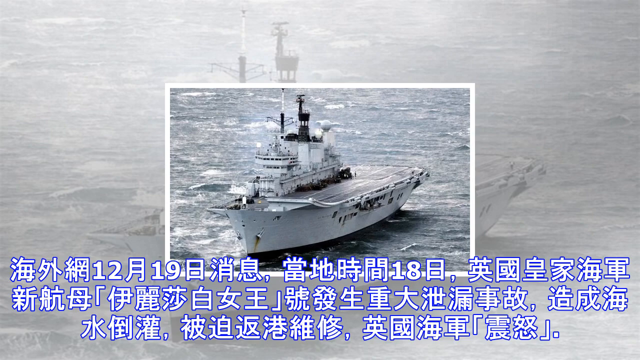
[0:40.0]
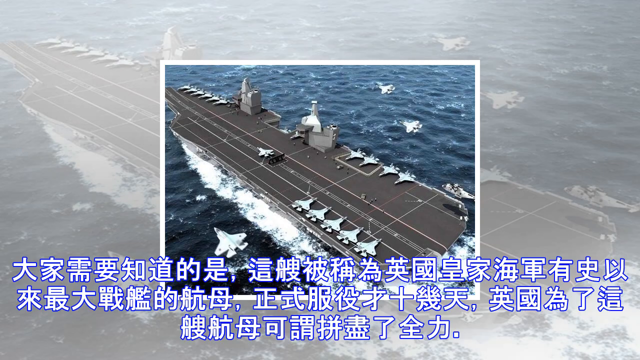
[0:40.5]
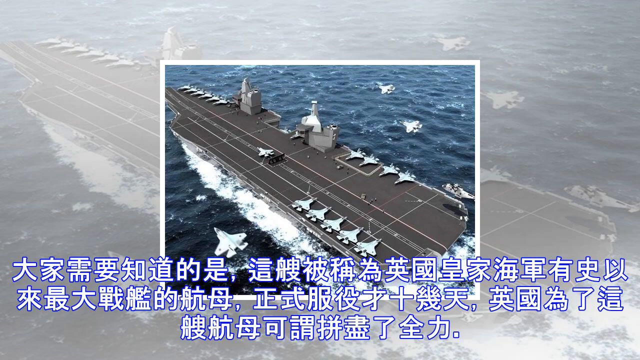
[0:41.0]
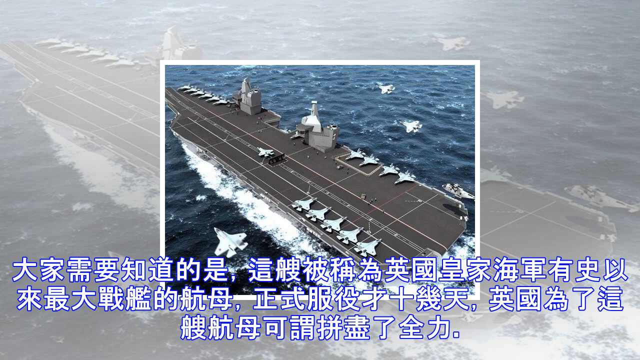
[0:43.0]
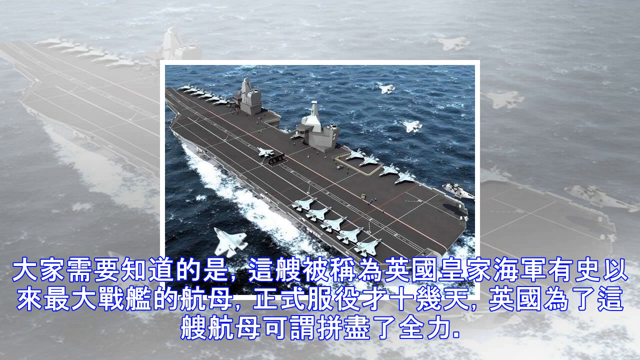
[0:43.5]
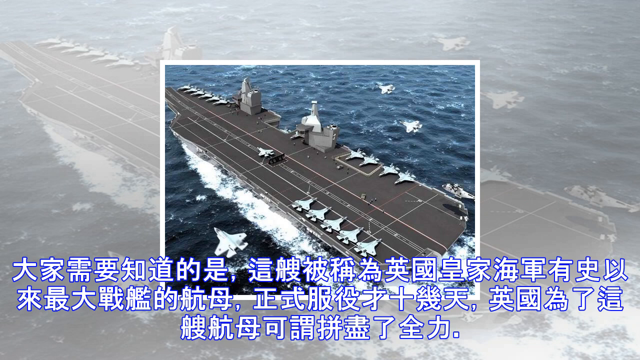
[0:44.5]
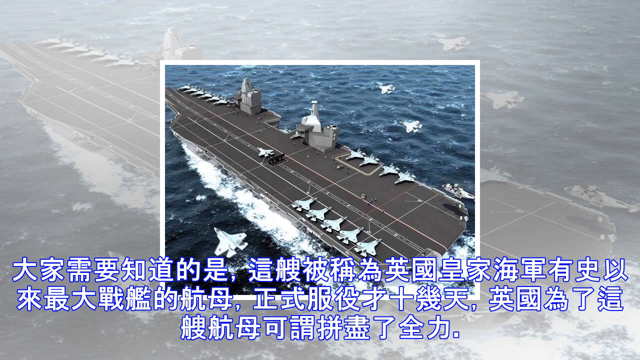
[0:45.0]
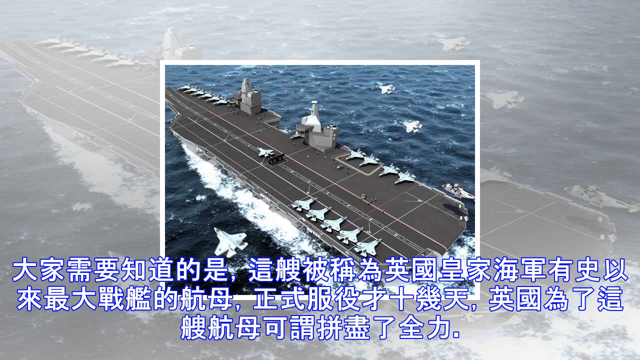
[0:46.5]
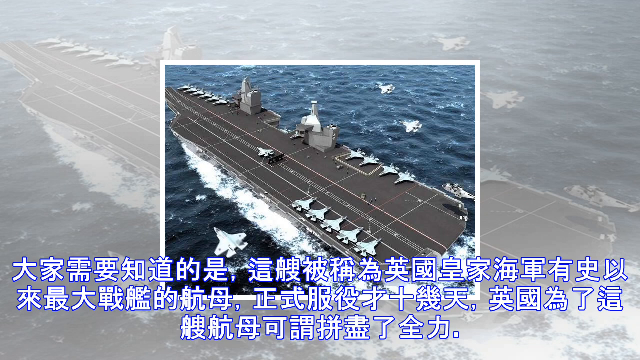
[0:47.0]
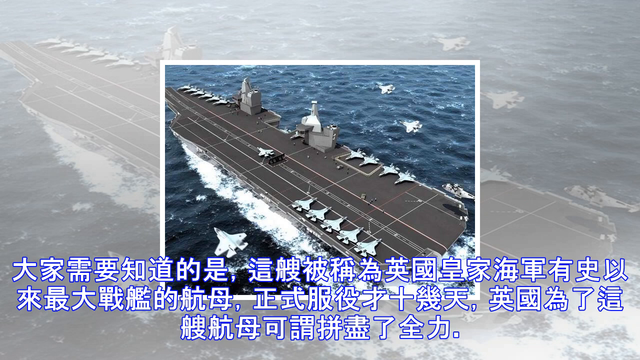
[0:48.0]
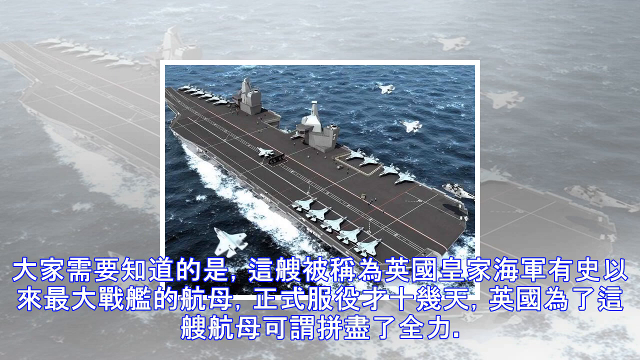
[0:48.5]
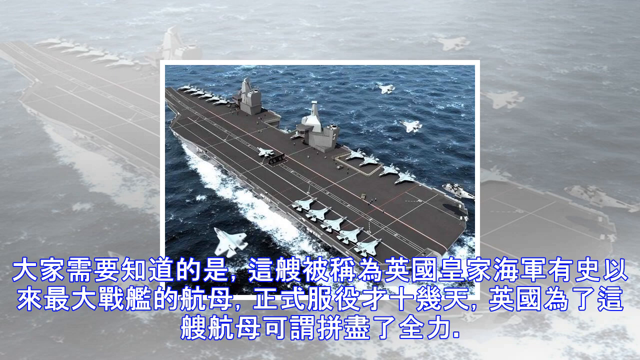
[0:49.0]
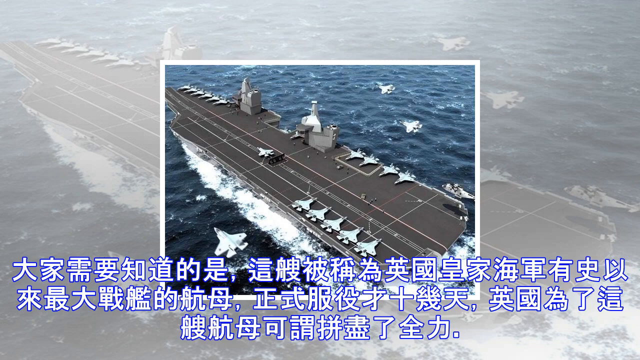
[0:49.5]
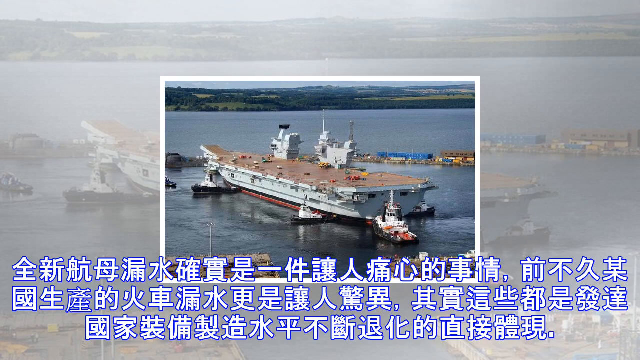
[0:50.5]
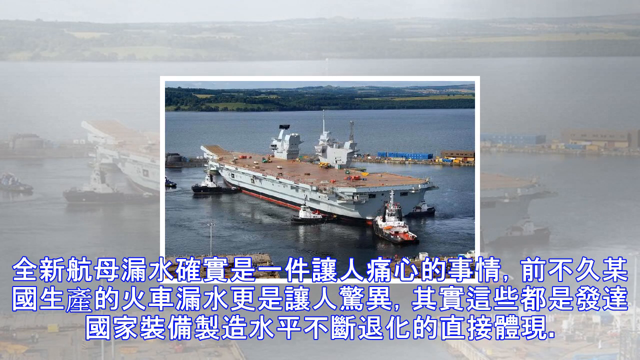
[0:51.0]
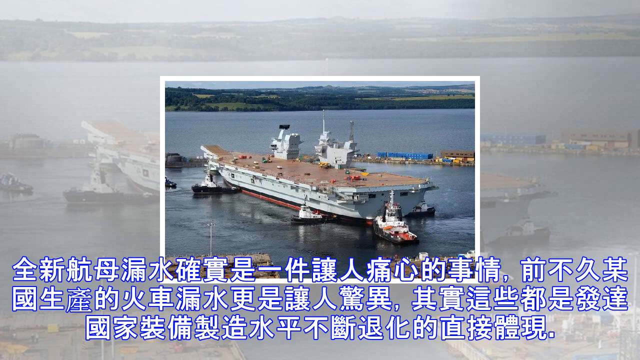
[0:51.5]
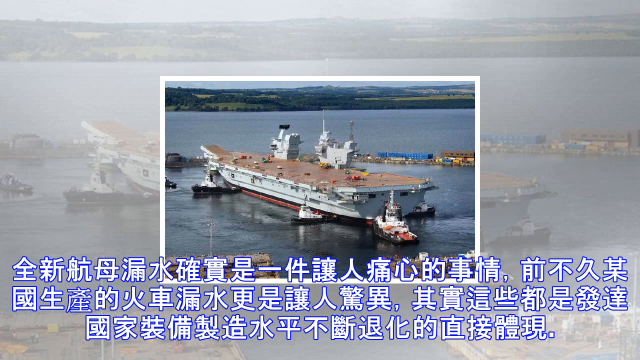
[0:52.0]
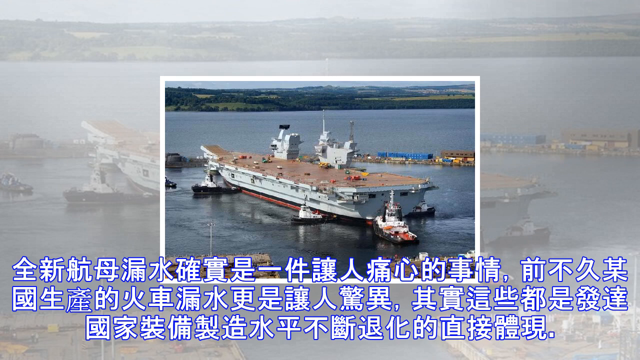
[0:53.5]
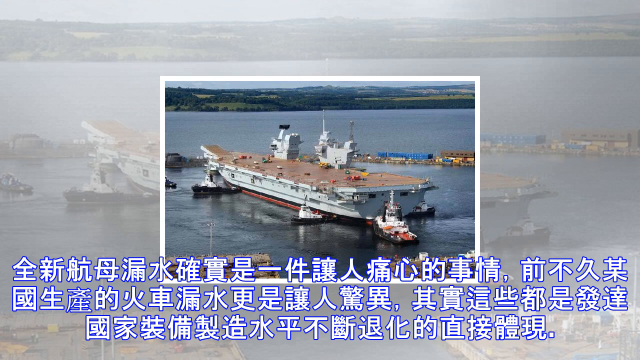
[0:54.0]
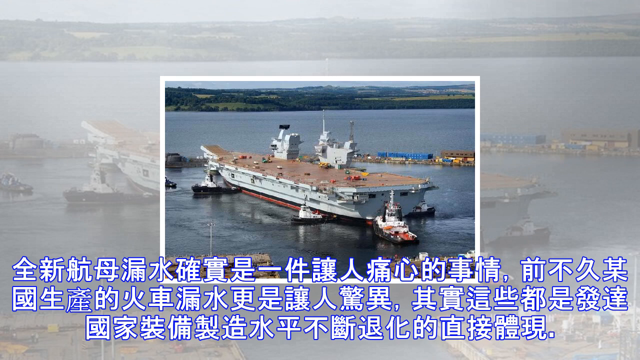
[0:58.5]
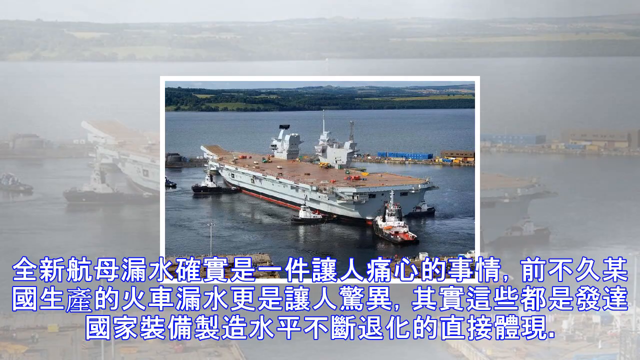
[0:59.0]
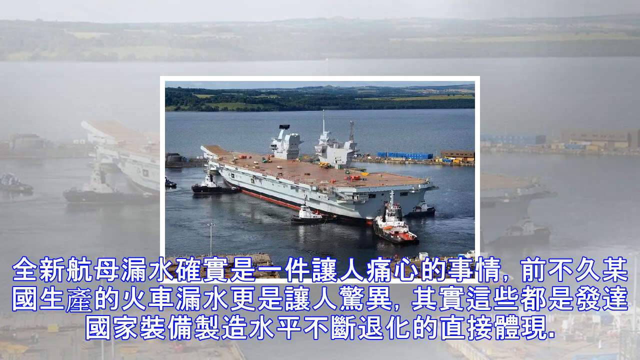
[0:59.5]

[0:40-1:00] The video switches to a new photograph of another vessel with planes landing and taking off from it. At the very tip, six white jet planes are lined up on the side, with a small building next to them. Further down the same side, four more jet planes are sitting. Across from these, five white jets are sitting off to the side. To the left of the vessel, a jet fighter plane is flying next to it, and in the middle of the vessel a plane is ready to take off. The top of the vessel is mainly gray with white stripes. It is out in the middle of the ocean, which is mainly blue with white caps of water. Another picture then pops up showing another type of vessel, very flat on top and light tan, white on the sides with some orange and brown towards the bottom. At least four tugboats are helping either push this boat into port or push it out to the ocean.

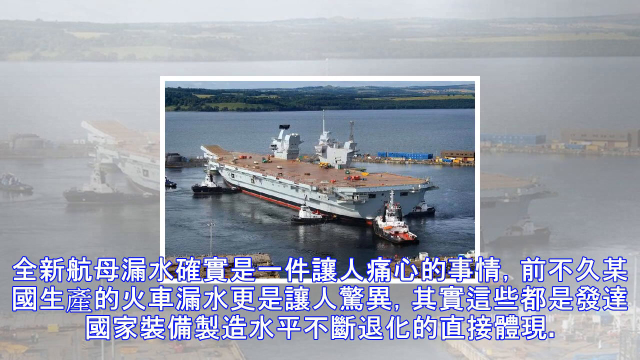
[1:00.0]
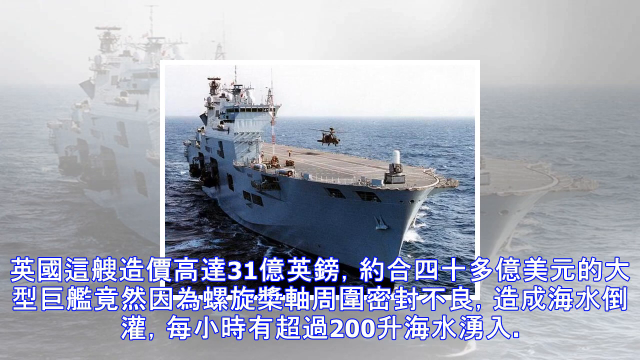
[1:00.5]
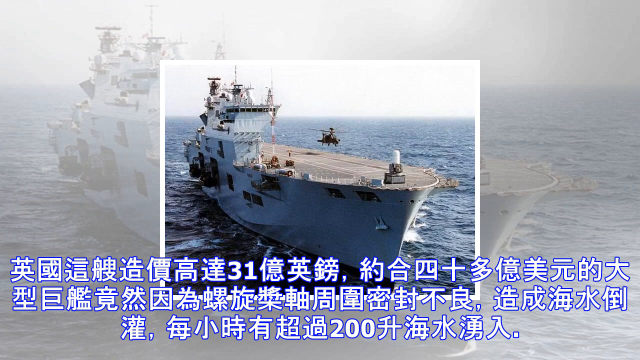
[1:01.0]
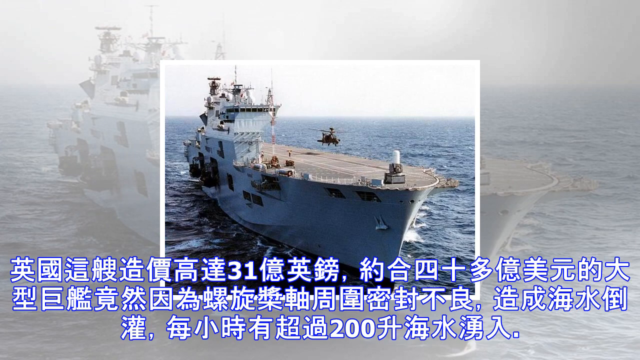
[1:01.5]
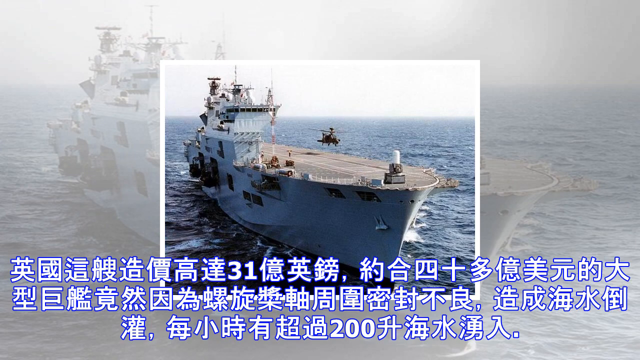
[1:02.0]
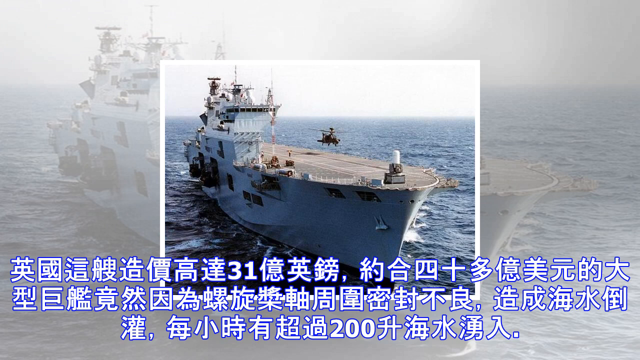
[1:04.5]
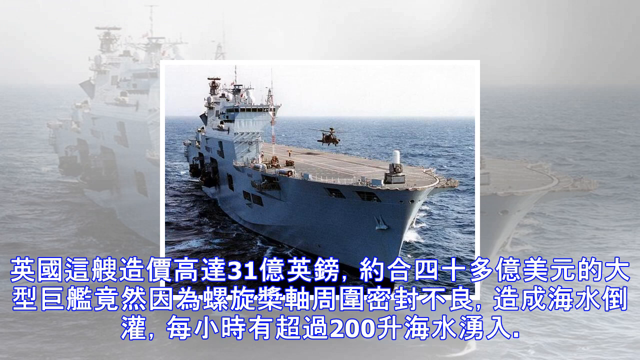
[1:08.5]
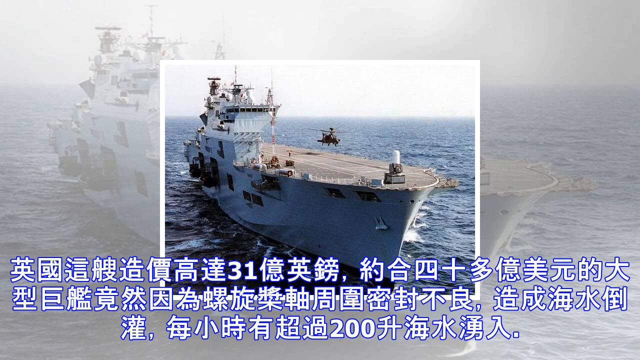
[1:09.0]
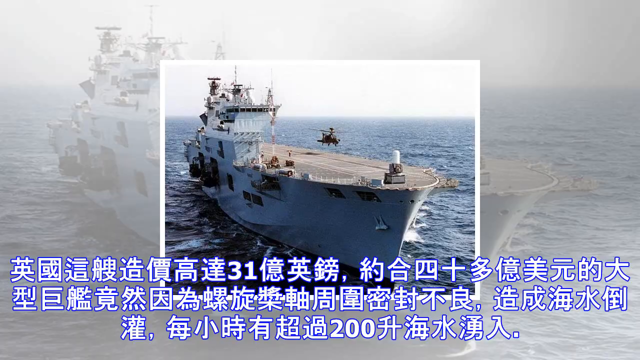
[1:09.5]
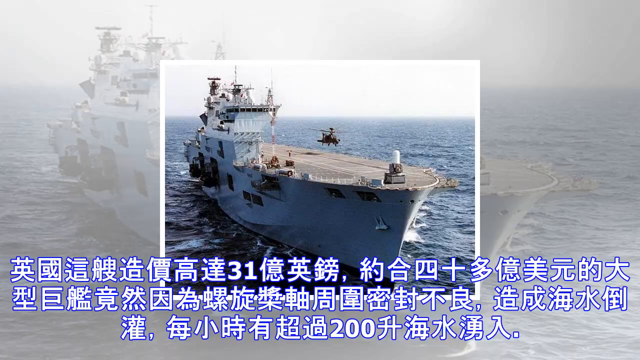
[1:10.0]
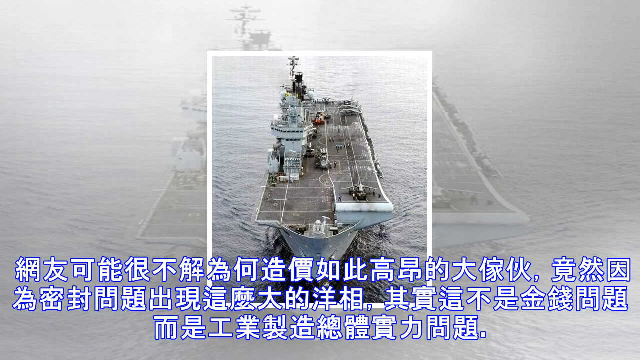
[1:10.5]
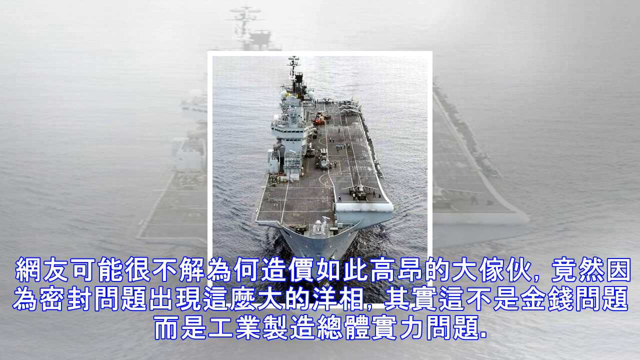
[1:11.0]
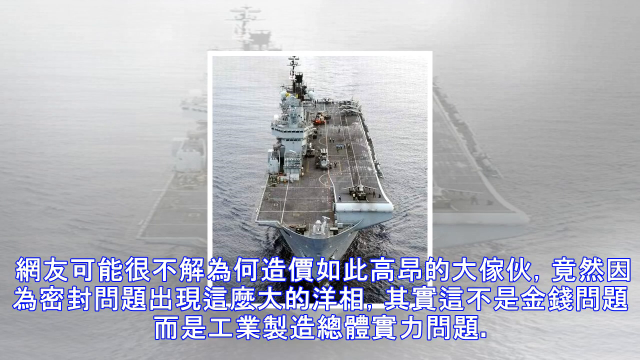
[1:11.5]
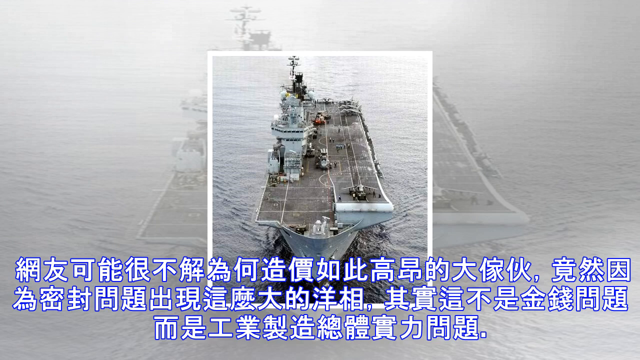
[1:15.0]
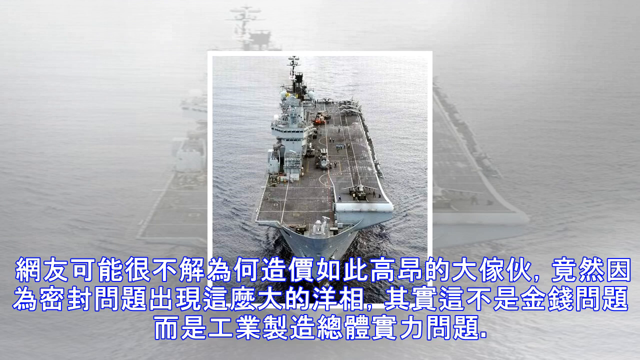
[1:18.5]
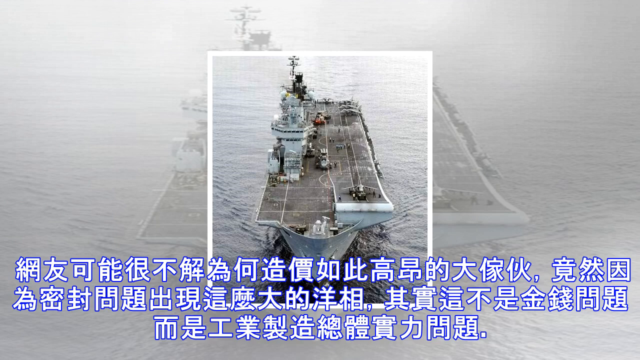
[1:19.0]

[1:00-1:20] A photograph shows a vessel out in the middle of the ocean. The side of the vessel is mainly light gray and has numerous cubby holes cut out of it. There are many antennas on top of the vessel, and numerous windows around the top. A helicopter is flying right above the vessel. The top section of the vessel is flat and gray. The ocean is red, and the sky looks to be cloudy. The next photo is one shown before: a white or tan vessel in the middle of the ocean that allows planes to take off and land. Its top is gray with white lines in different directions. It has an area with somebody who watches the arriving planes, and there are big antennas on top. Japanese and Chinese writing is below.